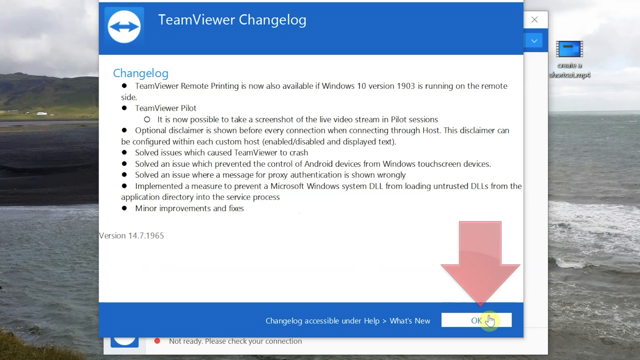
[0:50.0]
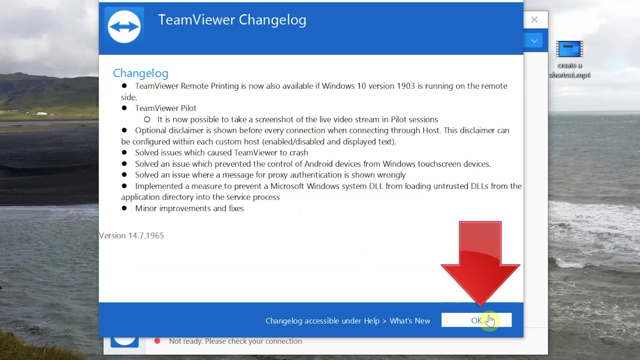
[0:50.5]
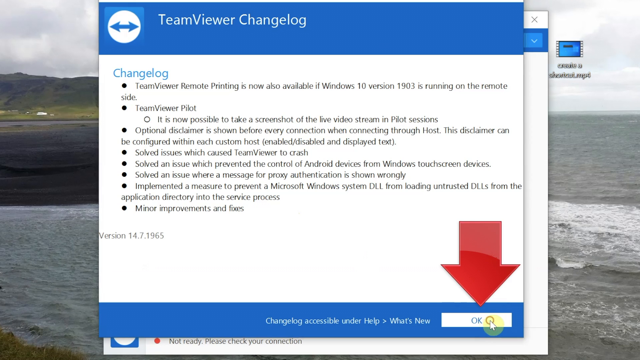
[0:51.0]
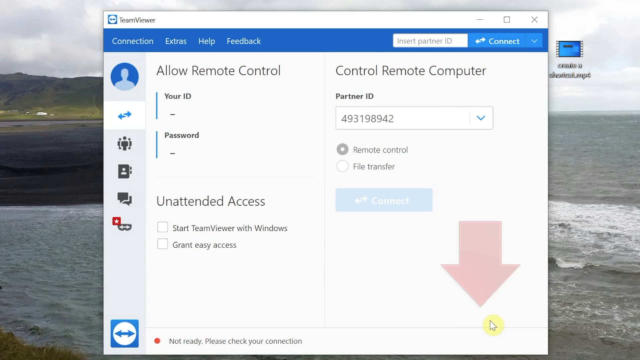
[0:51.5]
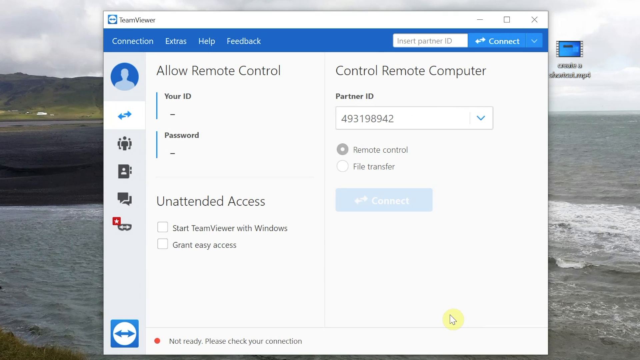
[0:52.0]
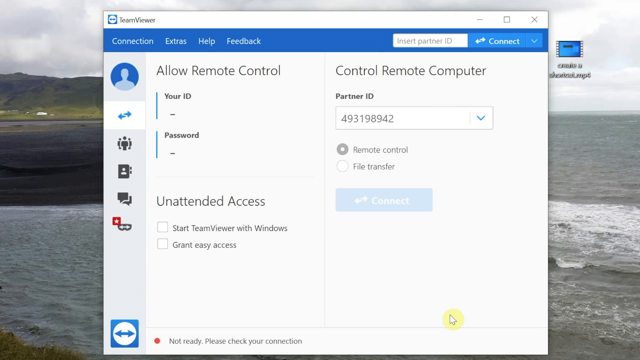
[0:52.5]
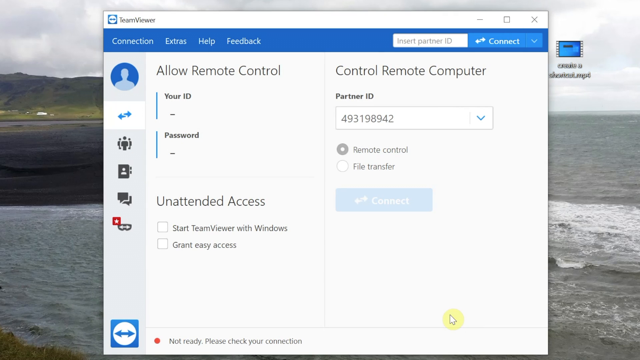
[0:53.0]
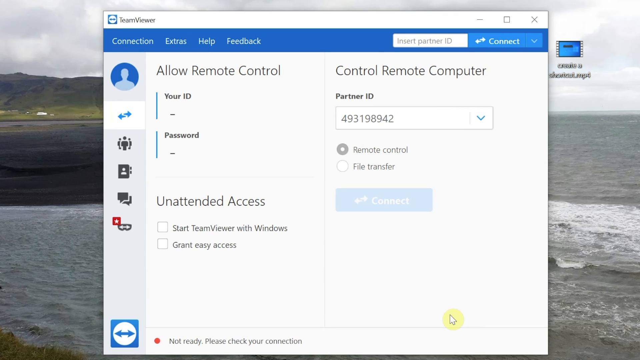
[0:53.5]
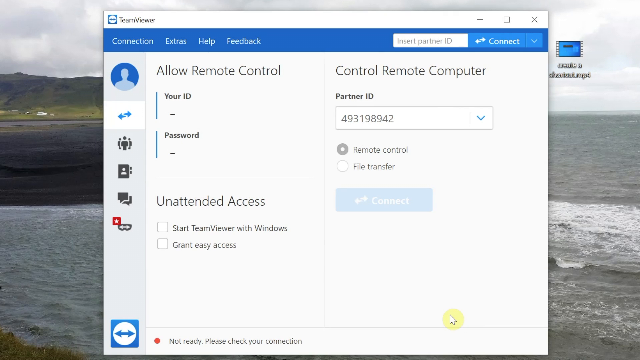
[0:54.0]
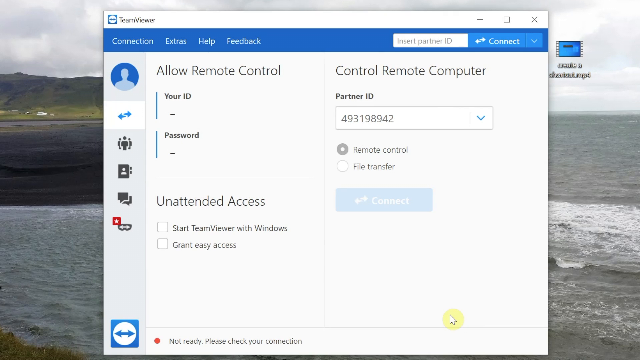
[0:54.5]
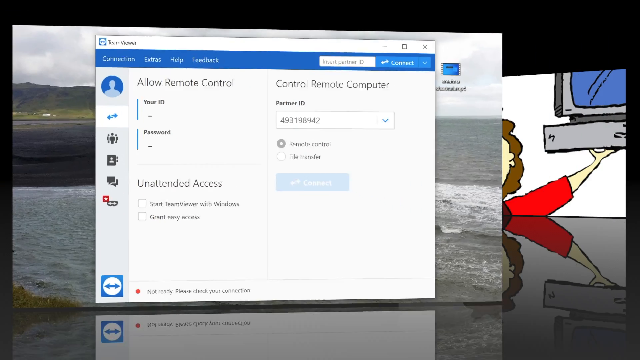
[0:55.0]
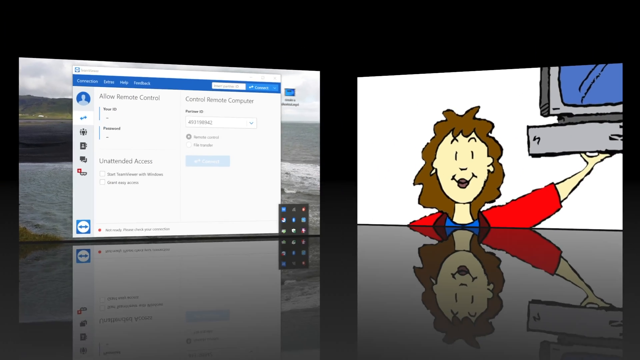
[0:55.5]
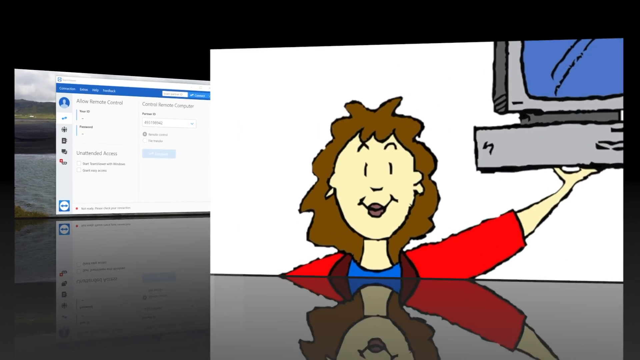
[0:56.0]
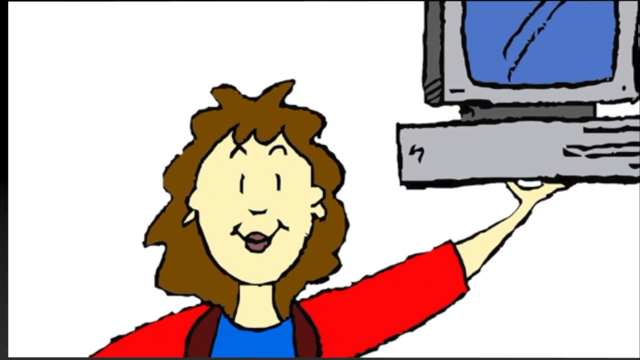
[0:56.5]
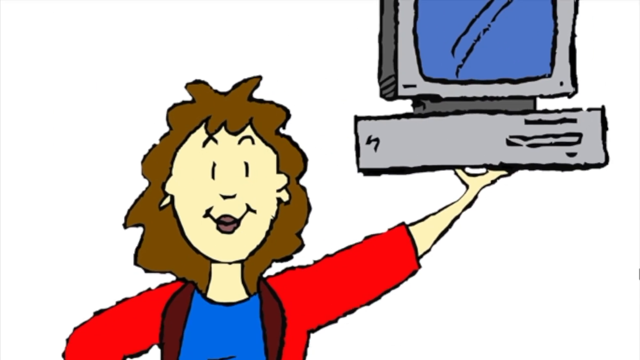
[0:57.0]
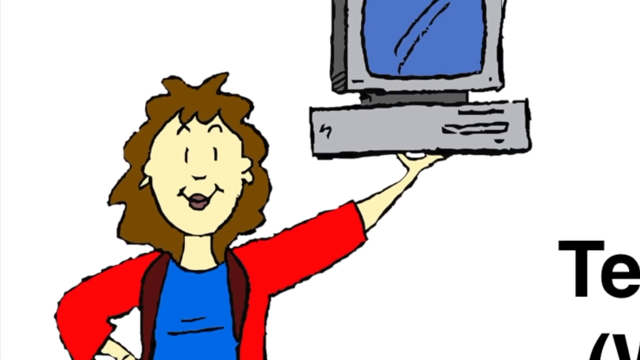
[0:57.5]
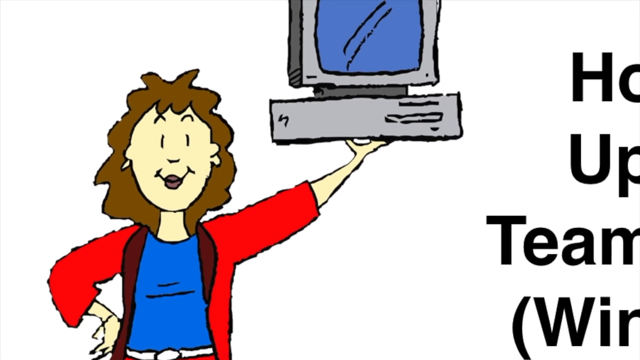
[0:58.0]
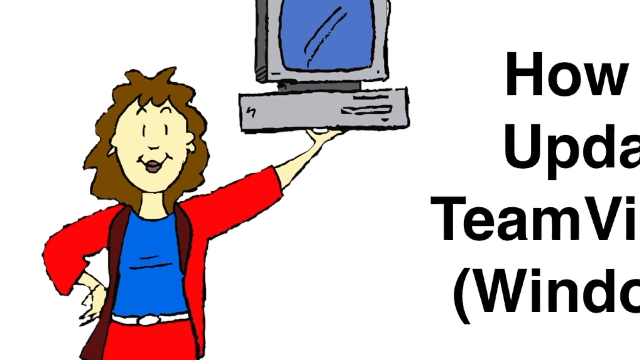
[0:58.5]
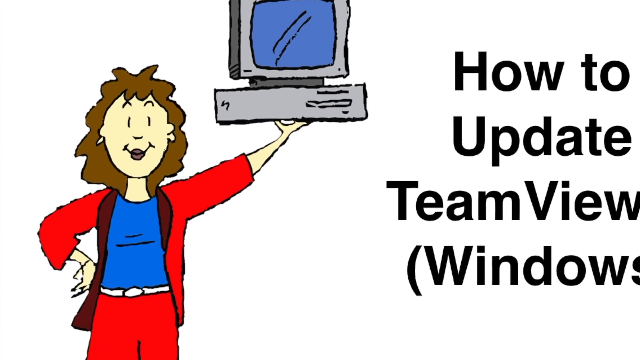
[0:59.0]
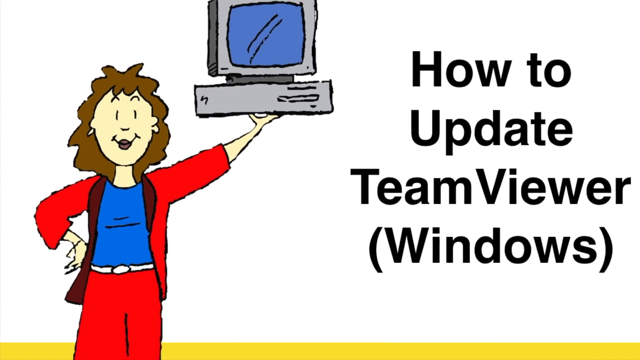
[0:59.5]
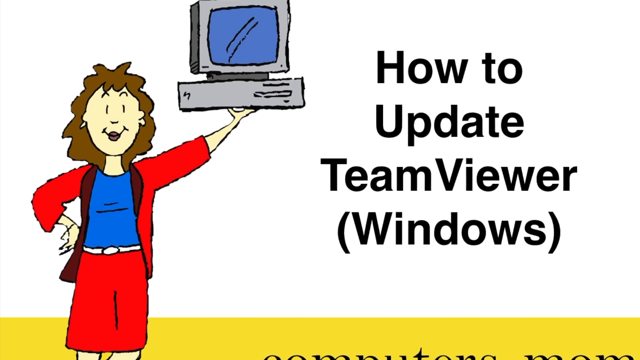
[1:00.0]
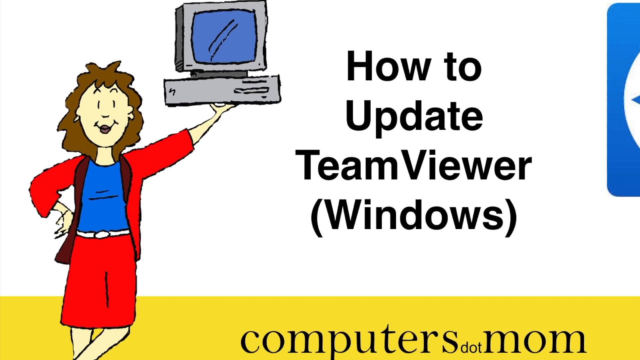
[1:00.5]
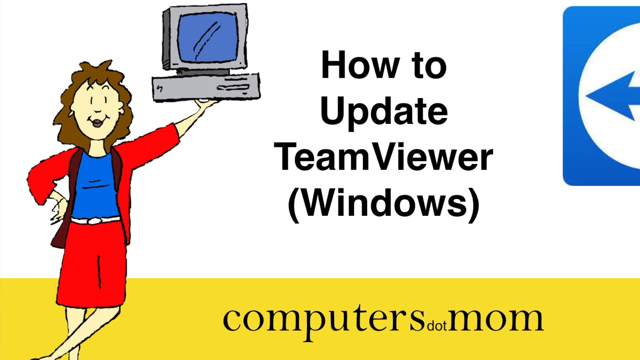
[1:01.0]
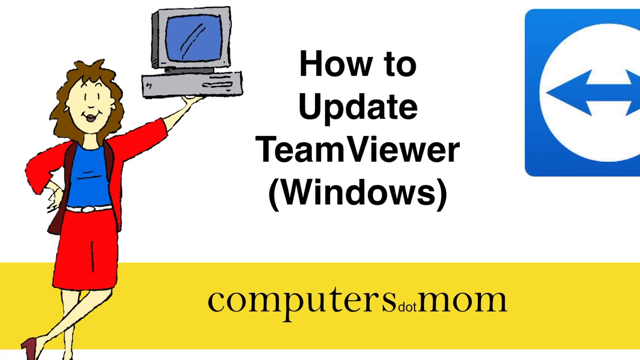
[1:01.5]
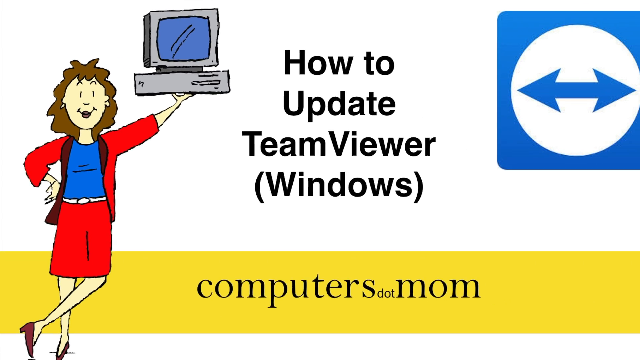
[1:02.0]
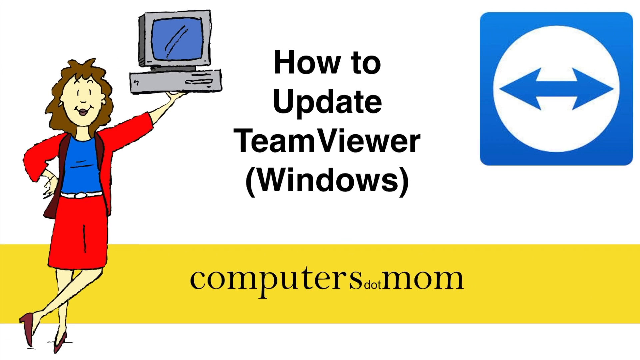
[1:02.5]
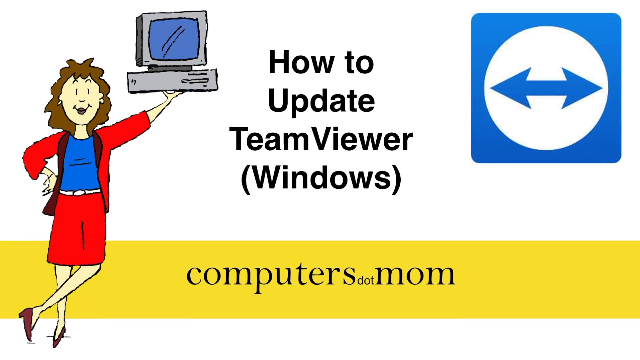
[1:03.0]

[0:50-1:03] The remote control screen returns, showing "allow remote control"; the numbers for the ID and the password have disappeared, and the blue connect button has been shaded in. That screen shrinks and goes off to the left, and on the right side the woman holding the computer comes into view. The view zooms out until the first screen fills the whole view: the woman holds the computer with her left hand, her left leg crossed over her right leg, with the computers.mom banner on the bottom over yellow.